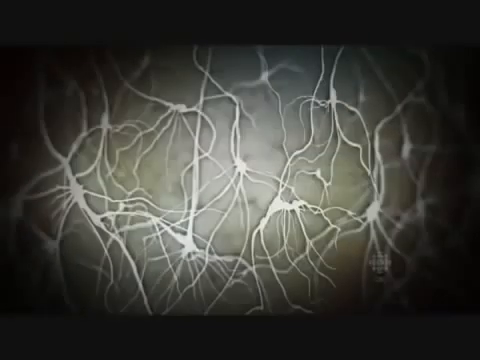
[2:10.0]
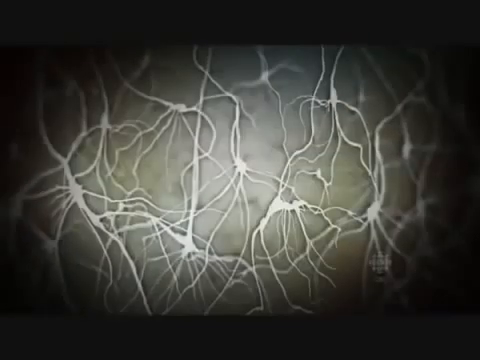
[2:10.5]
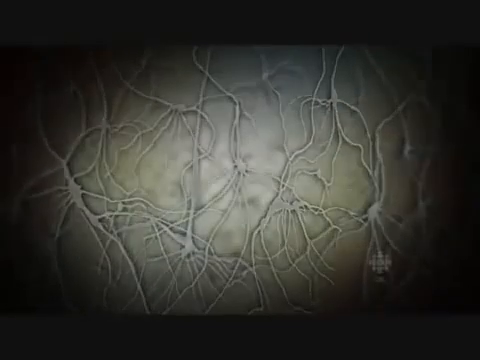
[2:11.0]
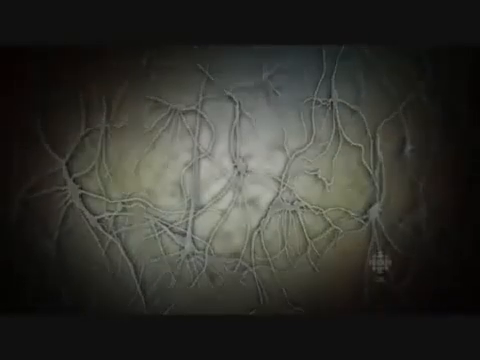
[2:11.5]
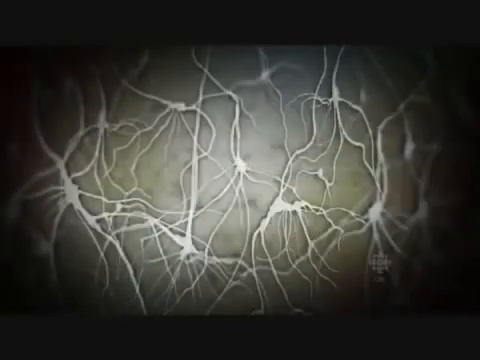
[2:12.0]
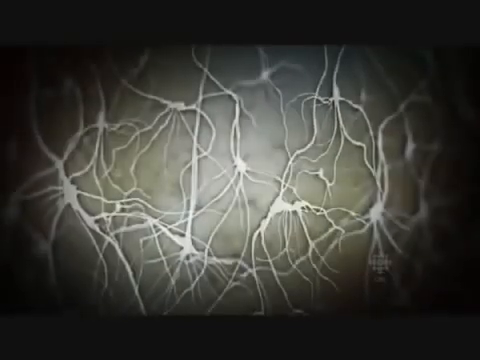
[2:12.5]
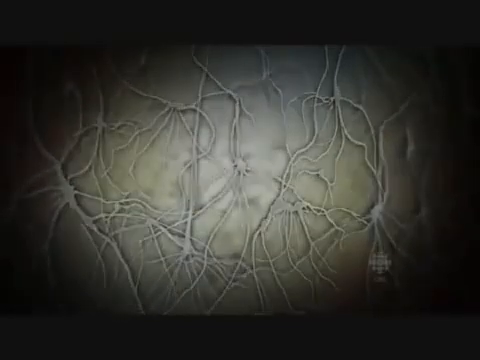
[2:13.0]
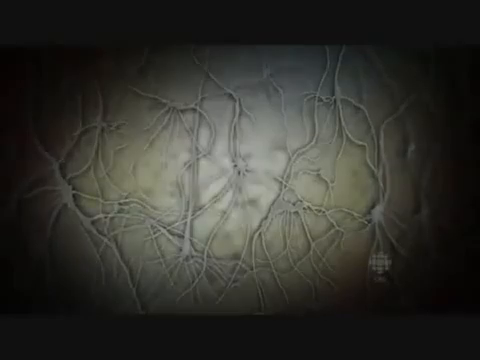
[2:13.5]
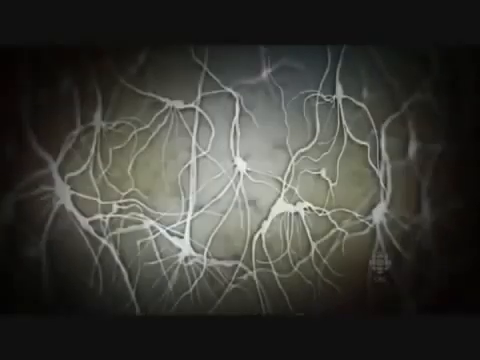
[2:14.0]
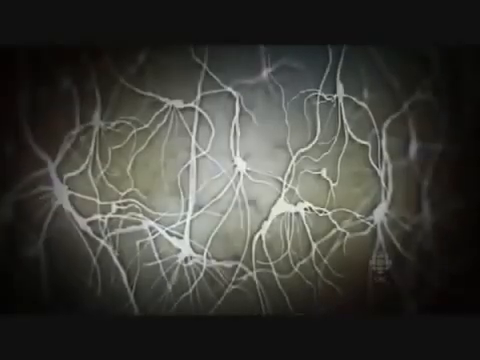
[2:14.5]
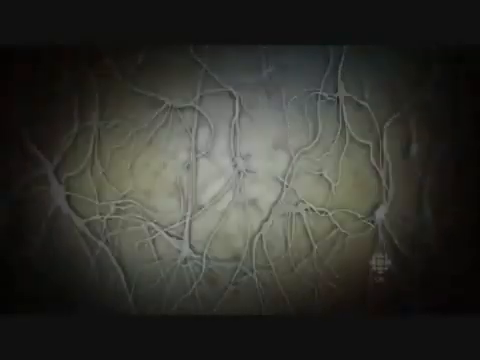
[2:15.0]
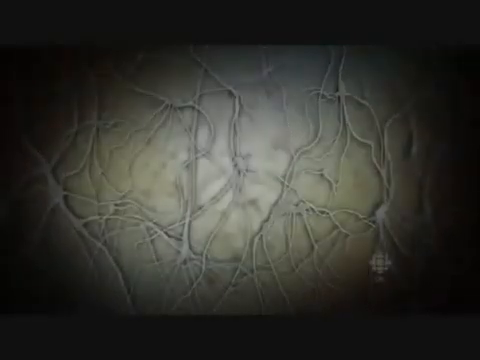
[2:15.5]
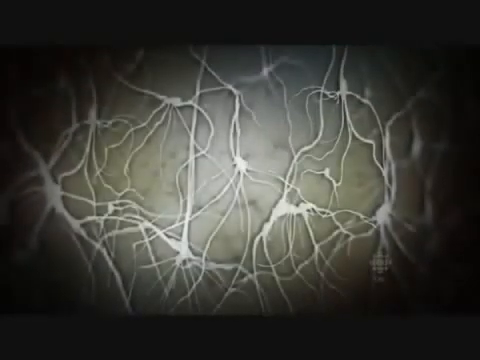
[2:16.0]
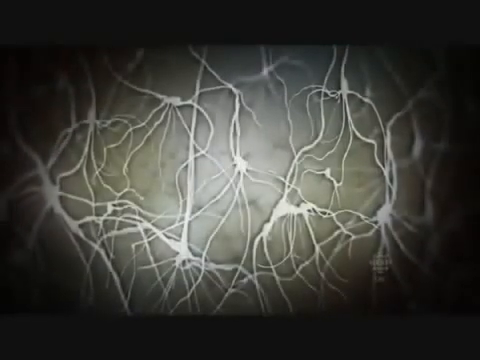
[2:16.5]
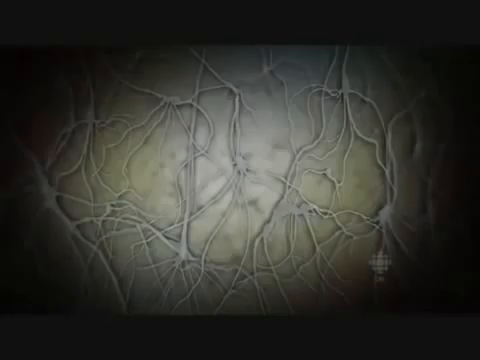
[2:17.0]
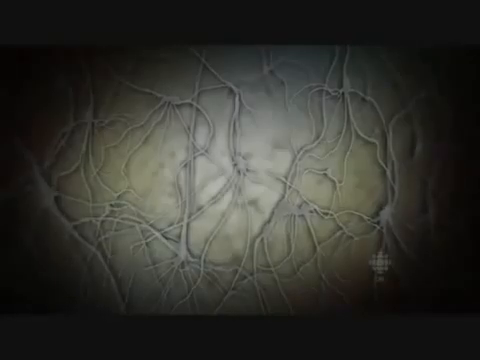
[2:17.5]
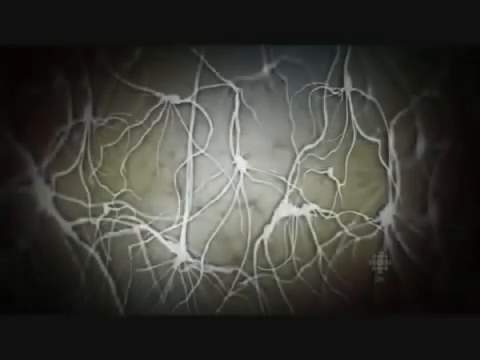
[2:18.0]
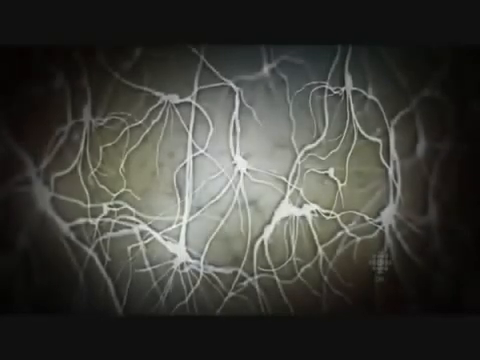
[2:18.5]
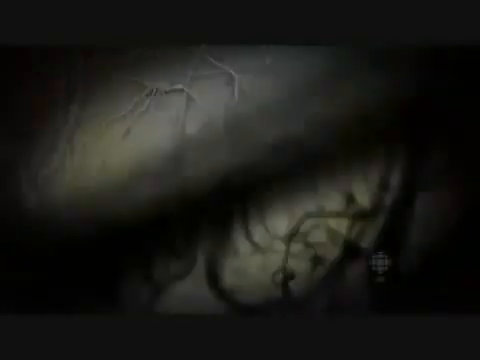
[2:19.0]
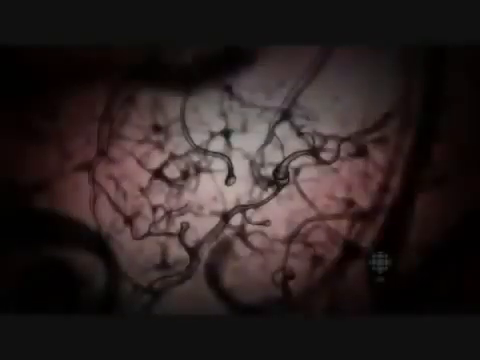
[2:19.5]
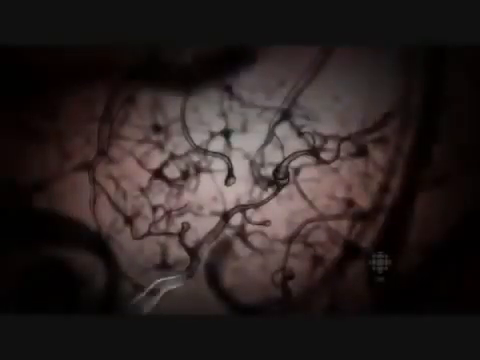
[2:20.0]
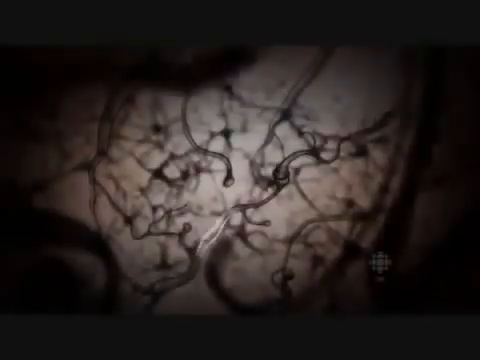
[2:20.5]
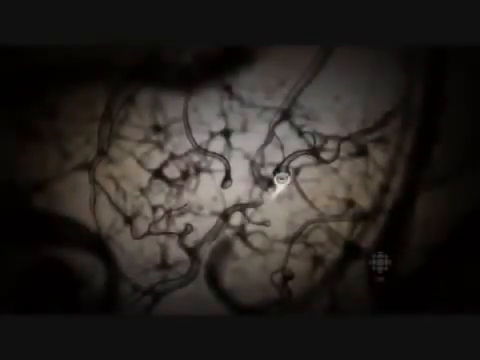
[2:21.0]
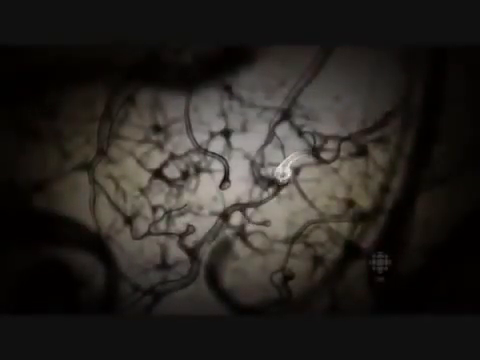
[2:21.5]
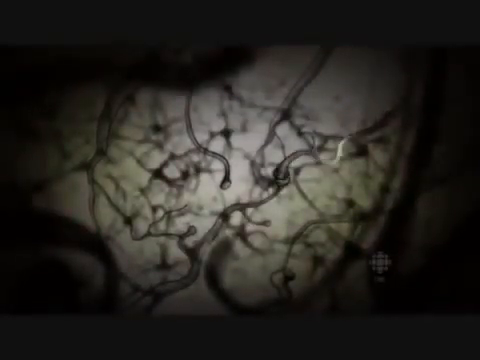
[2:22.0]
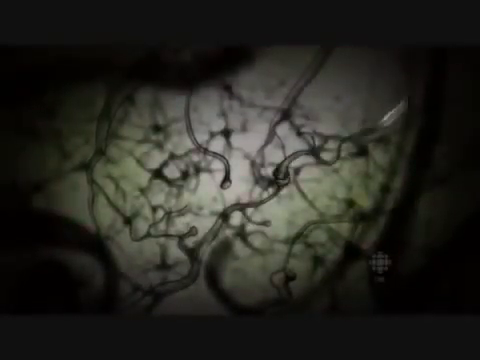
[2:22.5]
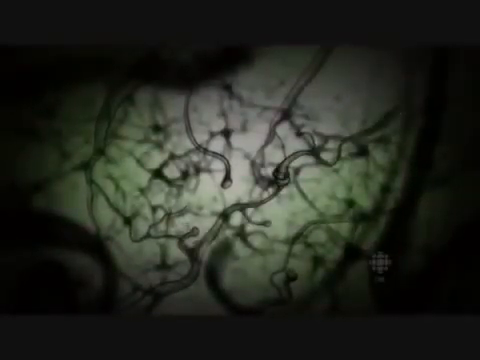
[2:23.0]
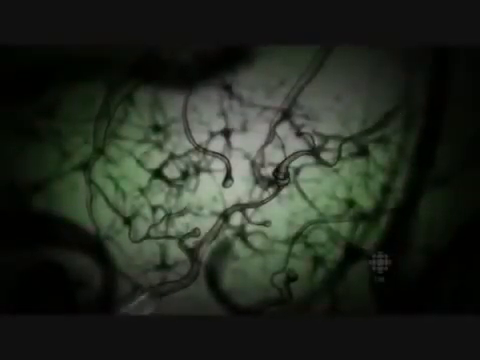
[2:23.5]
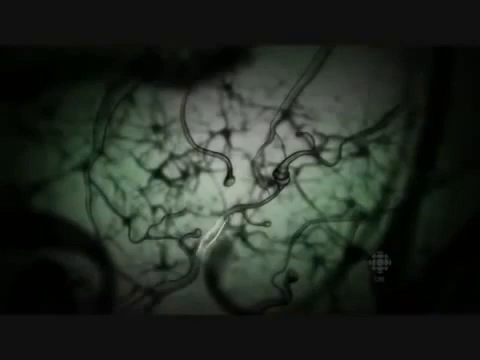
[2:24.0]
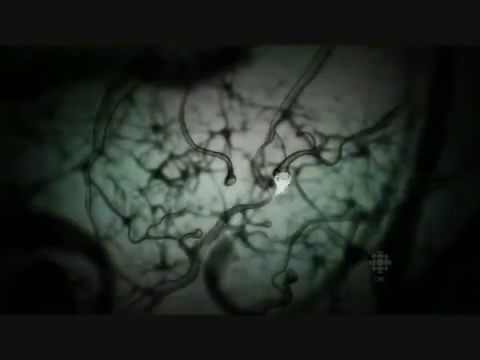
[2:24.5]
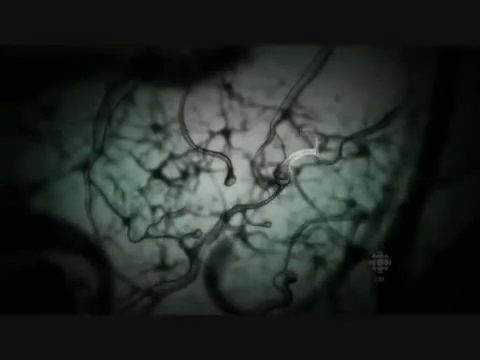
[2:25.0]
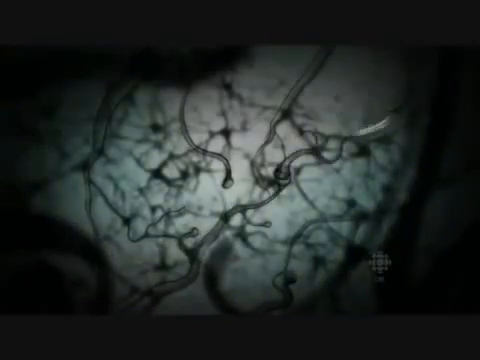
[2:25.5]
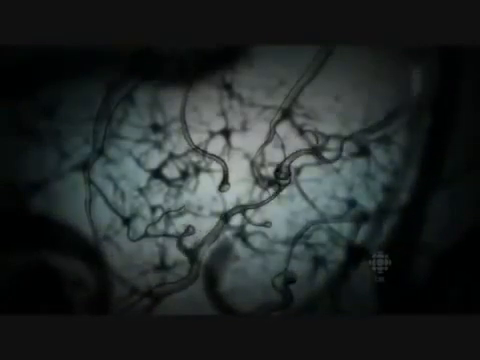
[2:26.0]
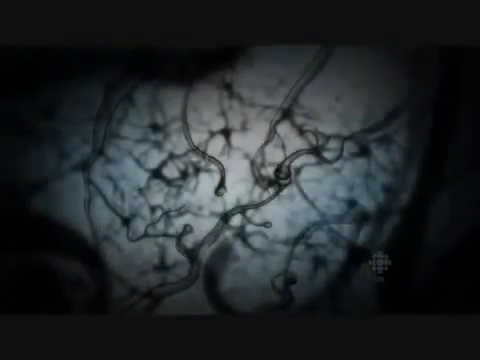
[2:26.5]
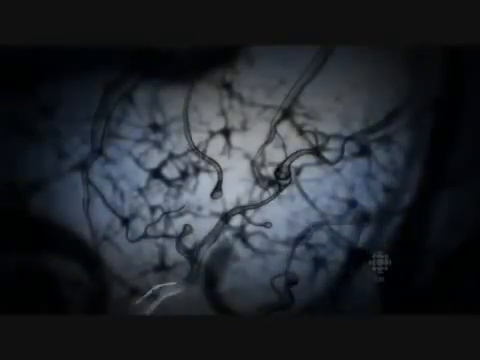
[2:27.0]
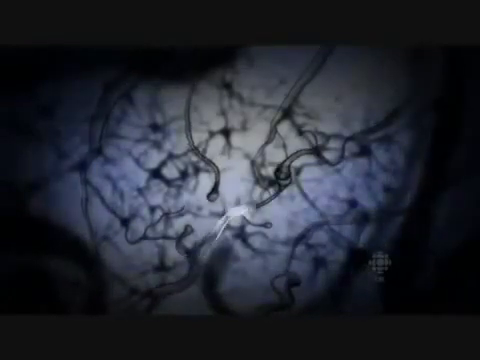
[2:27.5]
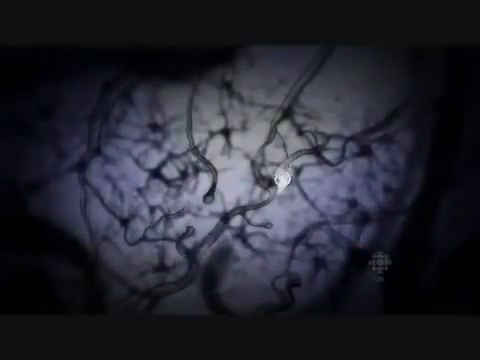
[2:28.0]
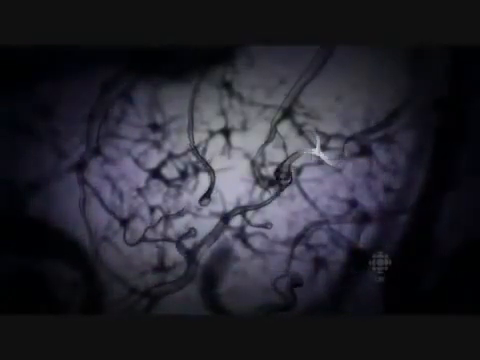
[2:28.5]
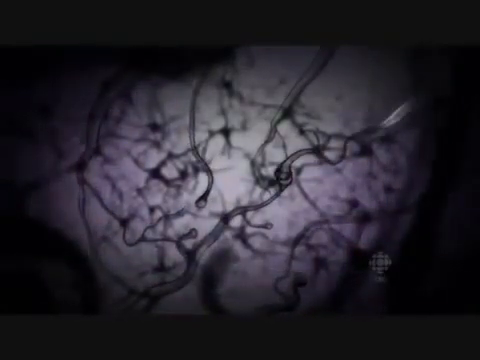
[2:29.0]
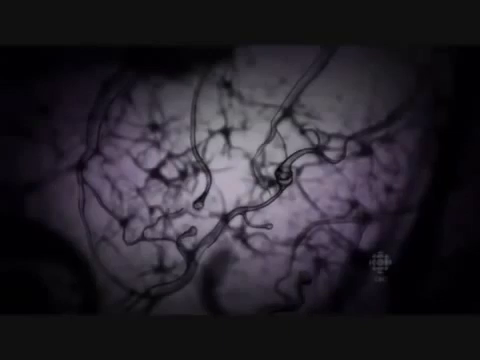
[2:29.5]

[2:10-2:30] The very bright white neurons repeatedly dim and glow bright. The scene changes to a bunch of squiggly neurons with light being transmitted through them. A light comes from the bottom left side and travels upward to the top right corner, and this happens repeatedly; the light travels from the bottom left corner to the upper right side and connects to another neuron. Two neurons are connected, one on the bottom left side and one on the top right side, and the light starts in the bottom left one and moves over to the top right one, moving throughout these two neurons.